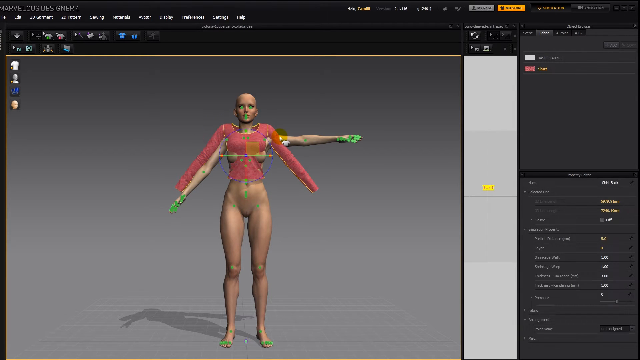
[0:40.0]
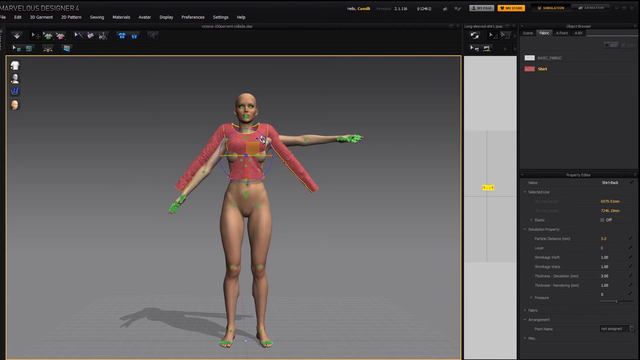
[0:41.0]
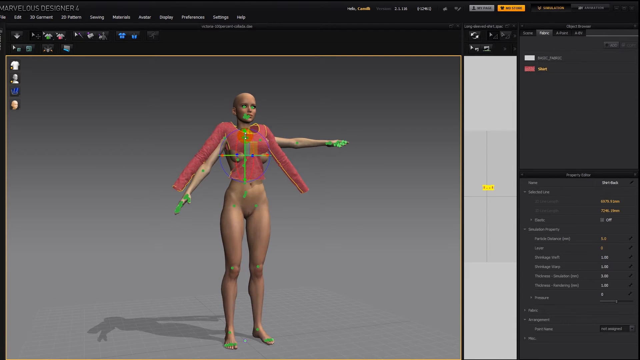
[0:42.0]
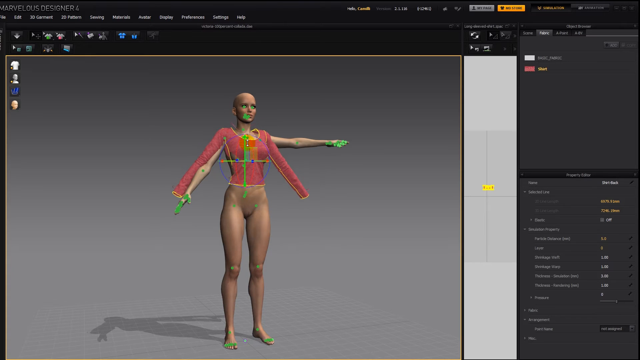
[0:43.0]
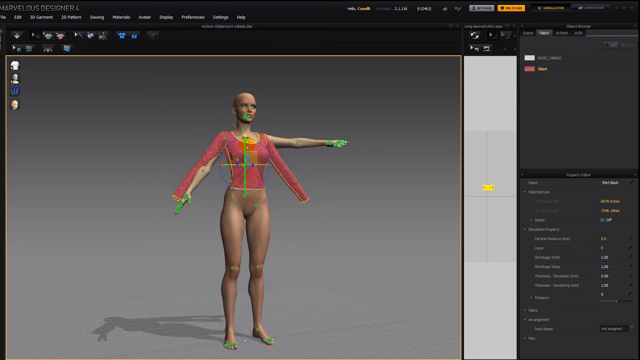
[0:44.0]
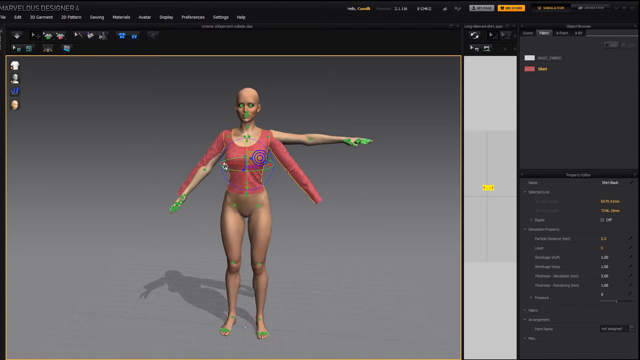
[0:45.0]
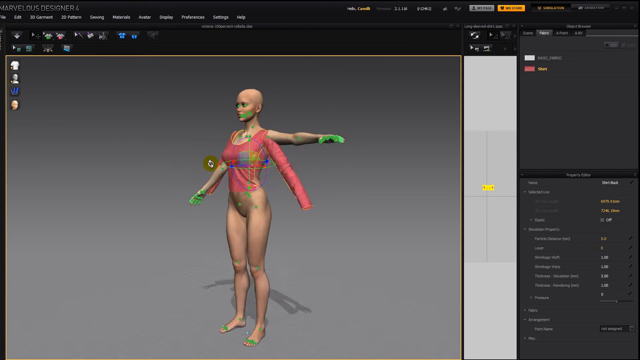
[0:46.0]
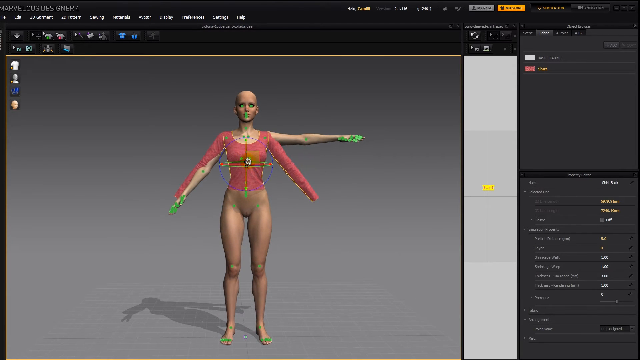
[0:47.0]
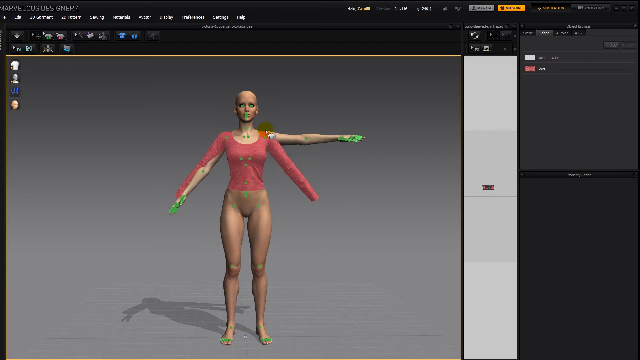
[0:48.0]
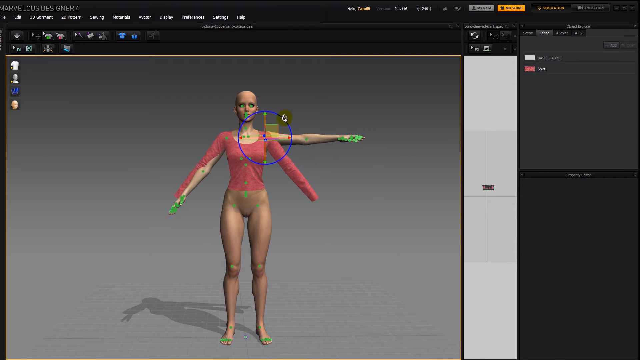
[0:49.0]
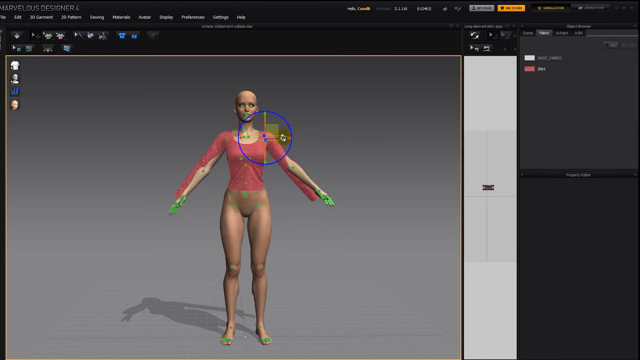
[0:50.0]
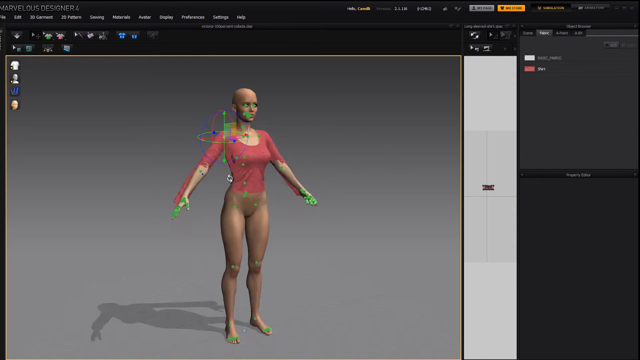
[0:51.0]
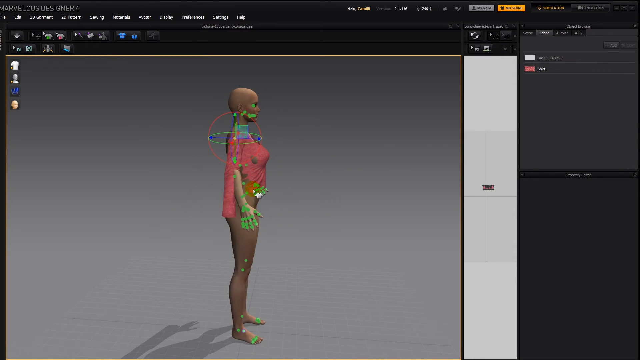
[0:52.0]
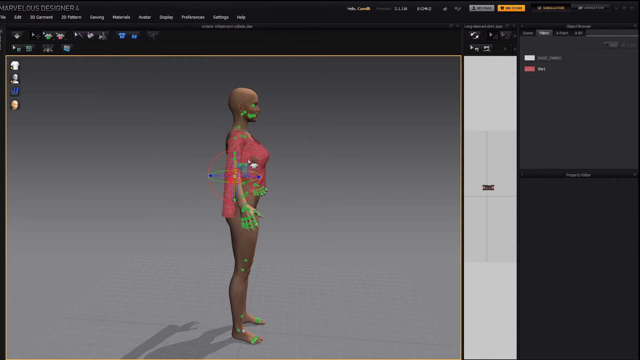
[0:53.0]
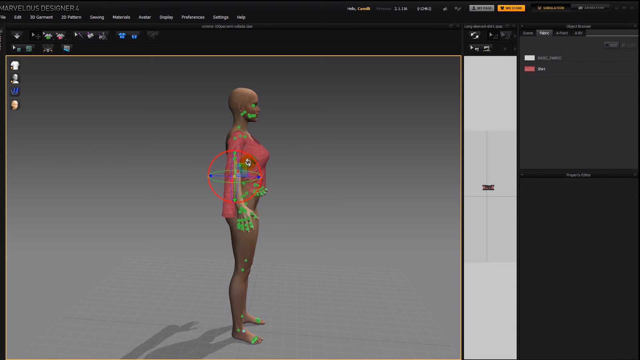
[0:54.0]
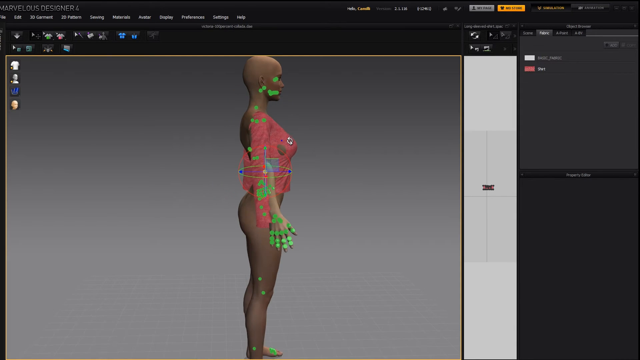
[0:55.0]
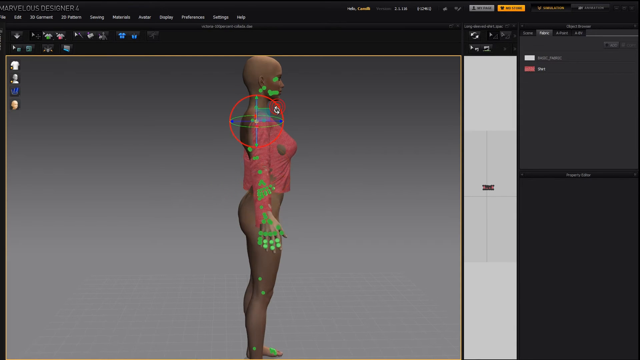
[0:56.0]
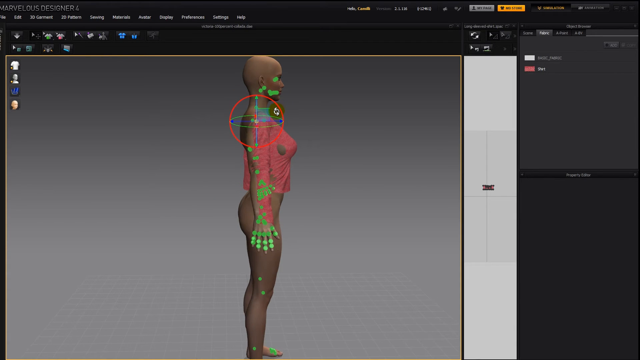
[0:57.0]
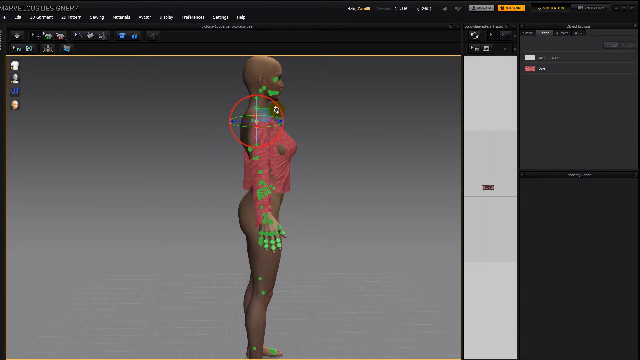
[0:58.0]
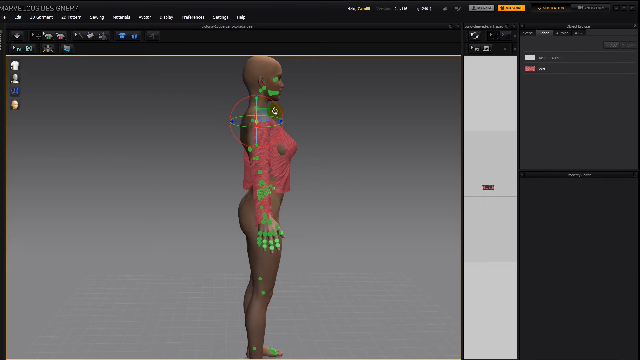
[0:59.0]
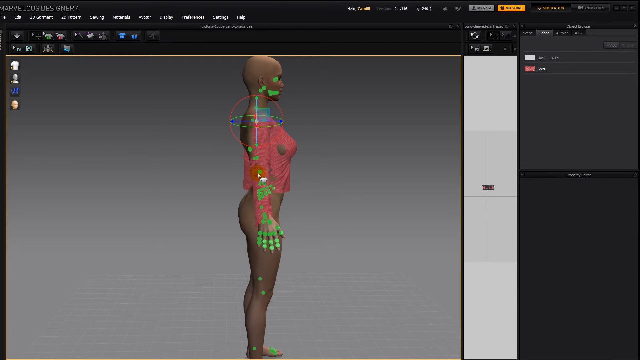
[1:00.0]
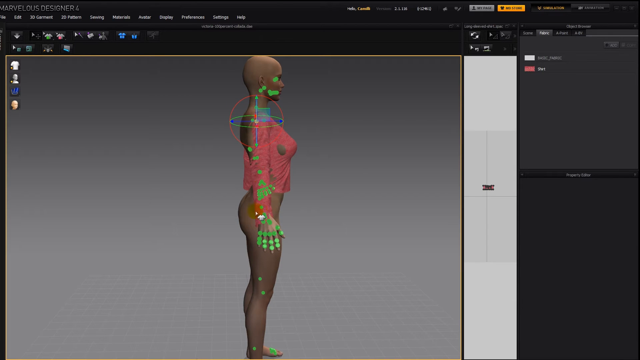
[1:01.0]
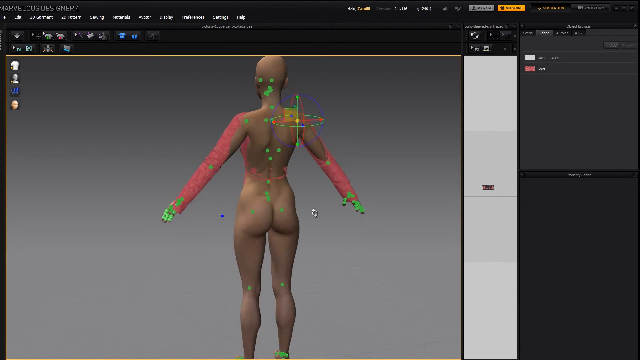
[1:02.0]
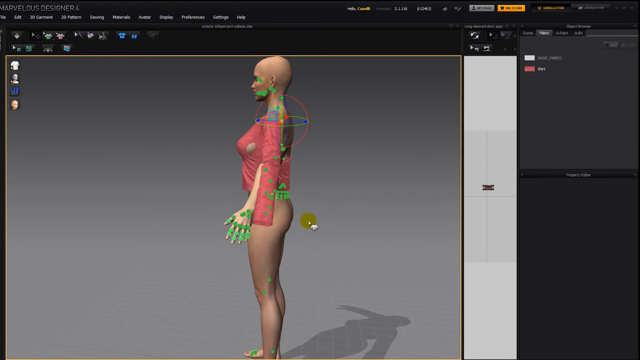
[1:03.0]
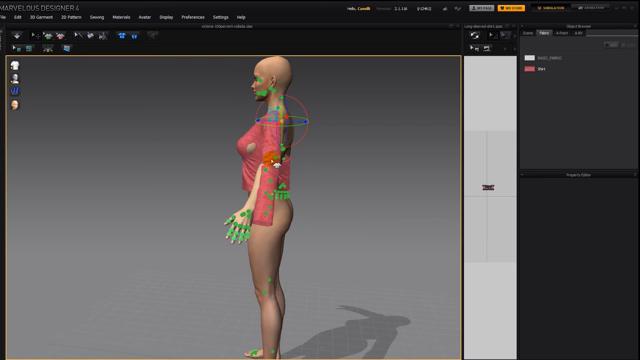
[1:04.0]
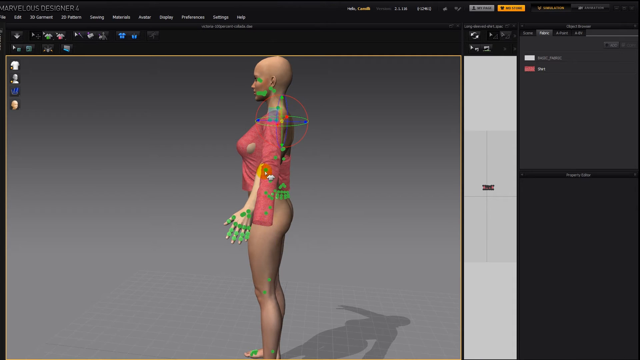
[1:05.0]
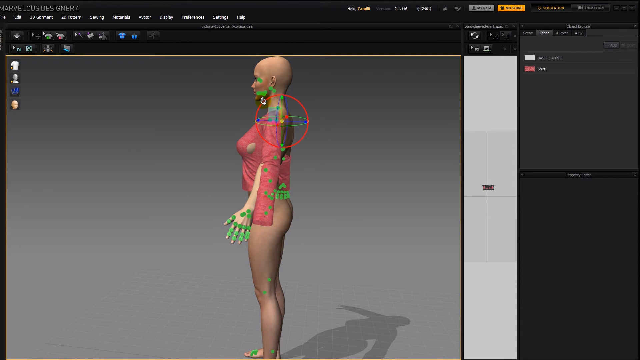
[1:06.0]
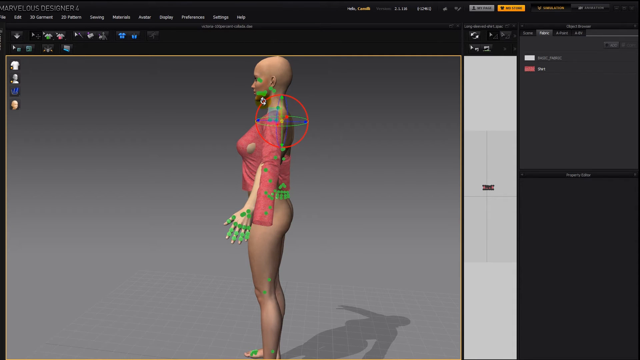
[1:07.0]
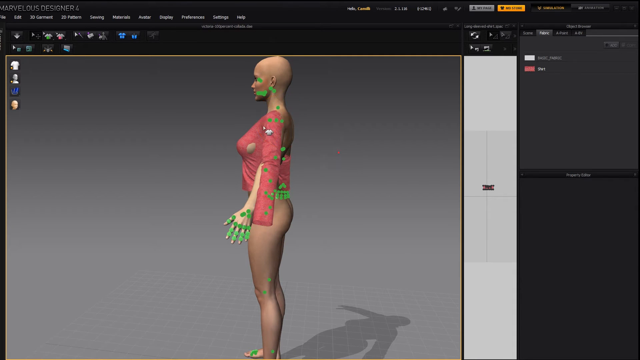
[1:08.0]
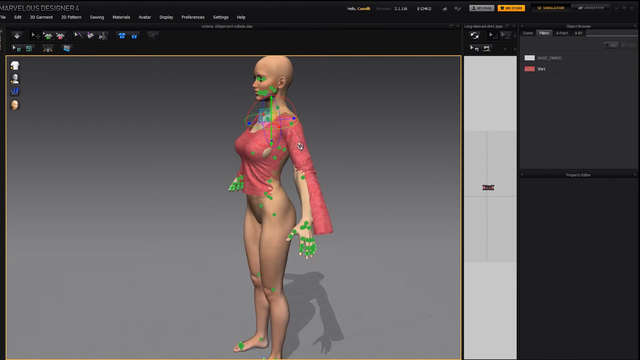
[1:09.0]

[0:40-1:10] The adjustment of her arms continues. She is turned a little, then turned again, apparently to get an accurate measurement. A click on her shoulder brings up a purple circle with a line going up and down in its middle and an oval, kind of like the top of a cylinder or a glass, in the middle as well. Clicking on this and on other parts of it helps move the arm around. The arm is being moved into the sleeve, but the sleeve does not completely cover the arm, so she is turned a little further to fit the arm exactly into the sleeve. Once that is done, the sleeve covers the entire arm and the arm no longer sticks out of the shirt. Another, smaller circle pops up that appears to be red, representing her shoulder blades.